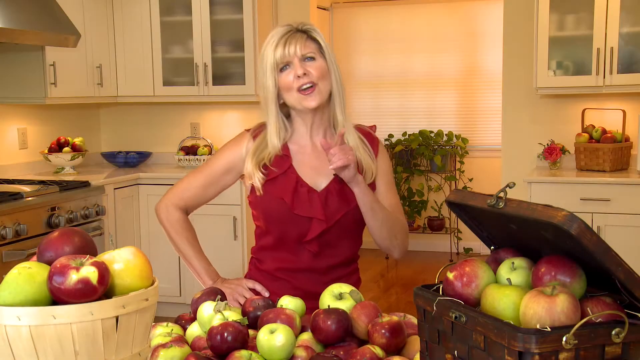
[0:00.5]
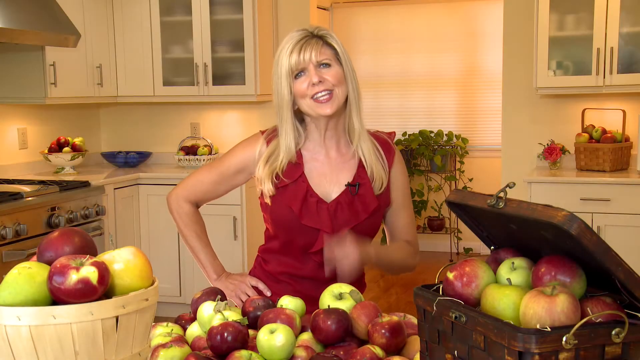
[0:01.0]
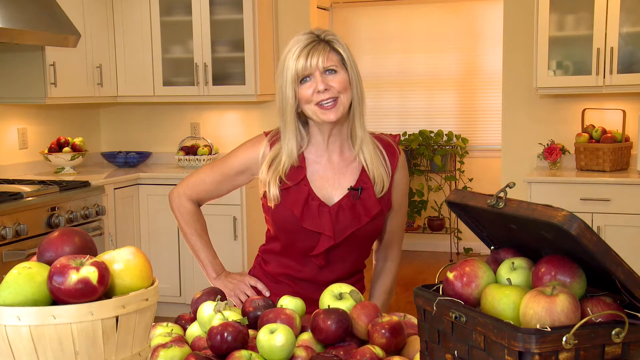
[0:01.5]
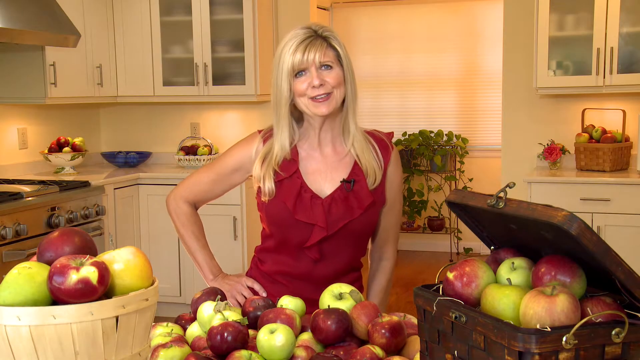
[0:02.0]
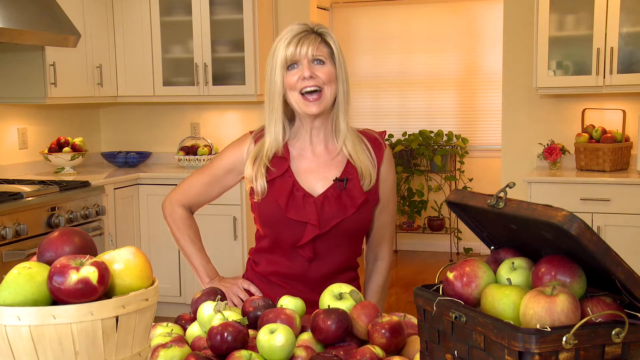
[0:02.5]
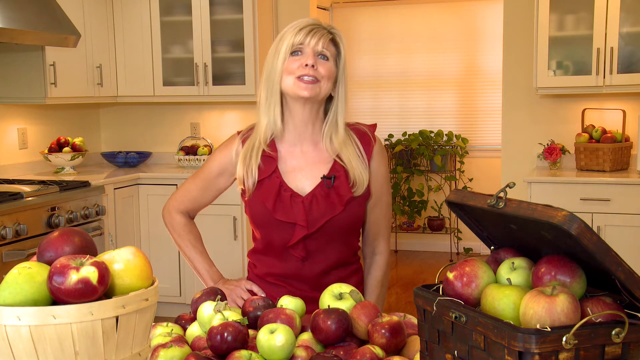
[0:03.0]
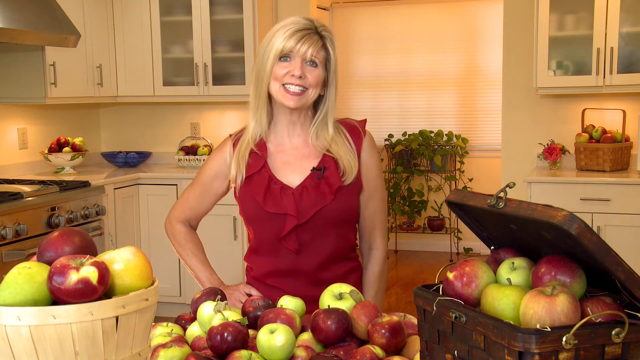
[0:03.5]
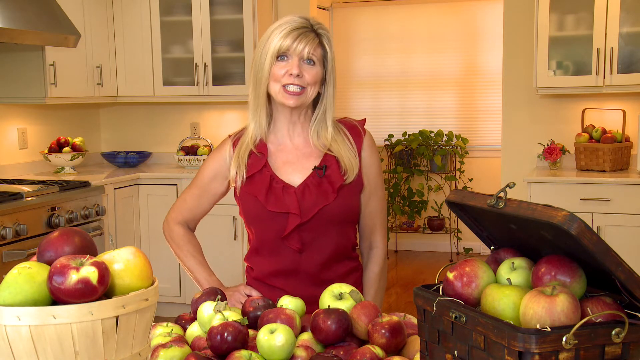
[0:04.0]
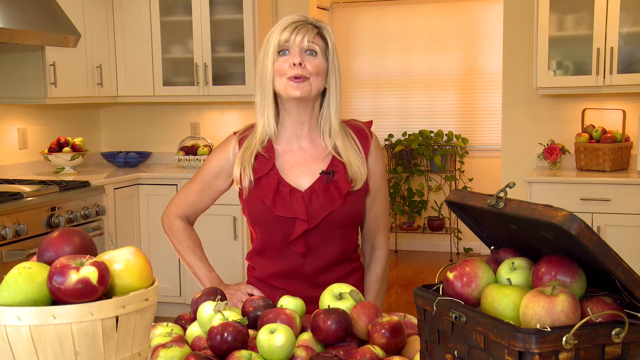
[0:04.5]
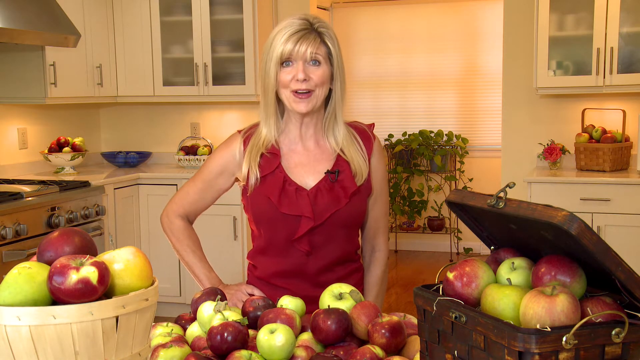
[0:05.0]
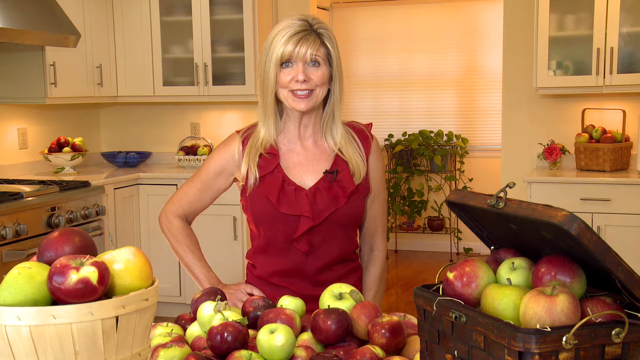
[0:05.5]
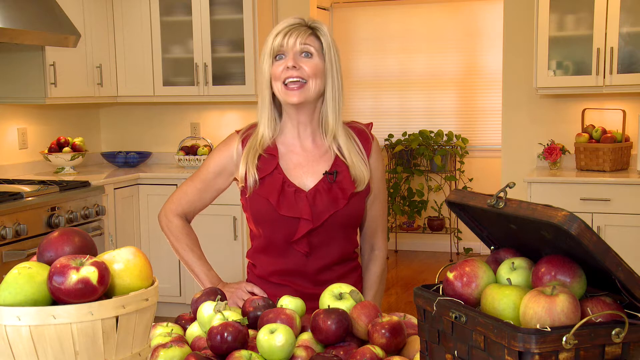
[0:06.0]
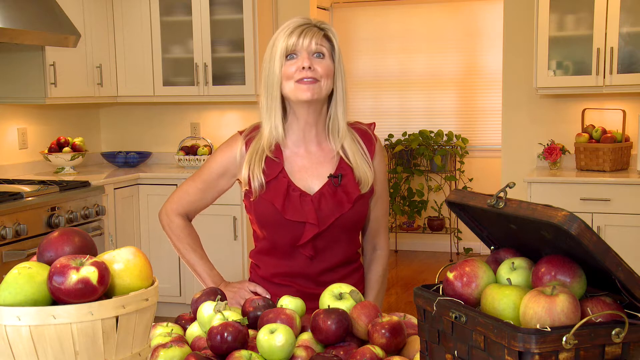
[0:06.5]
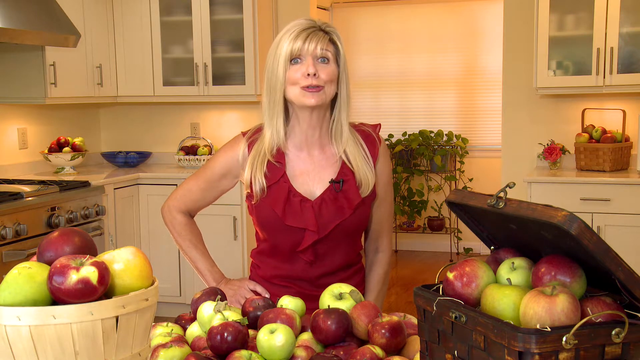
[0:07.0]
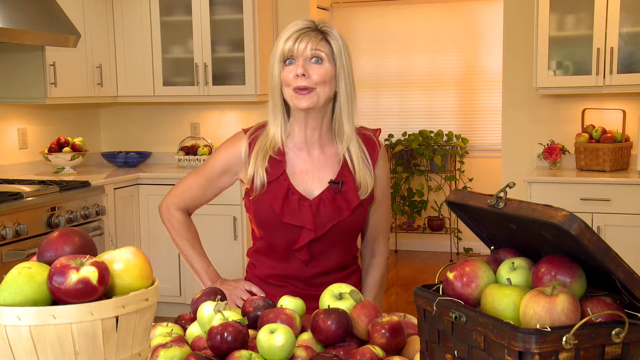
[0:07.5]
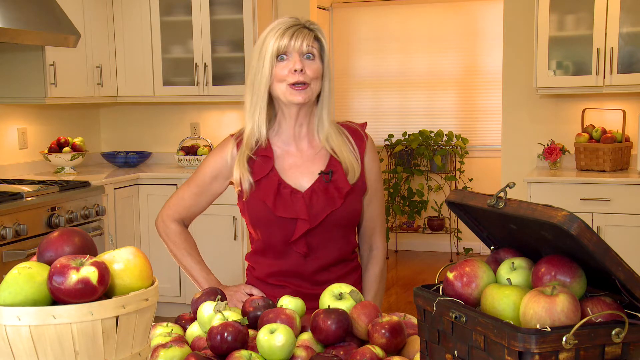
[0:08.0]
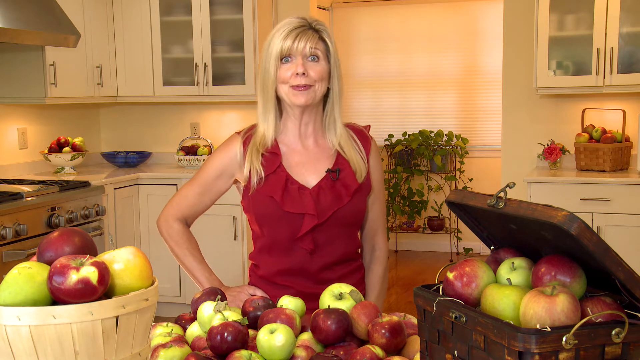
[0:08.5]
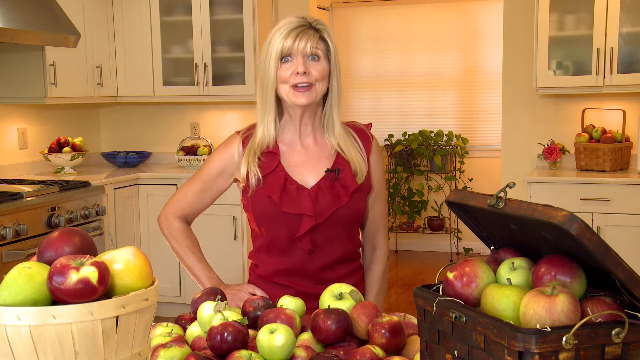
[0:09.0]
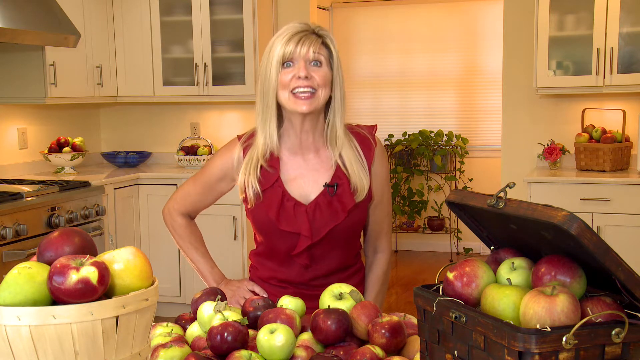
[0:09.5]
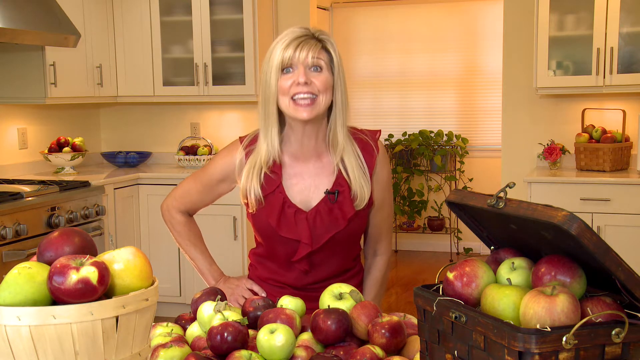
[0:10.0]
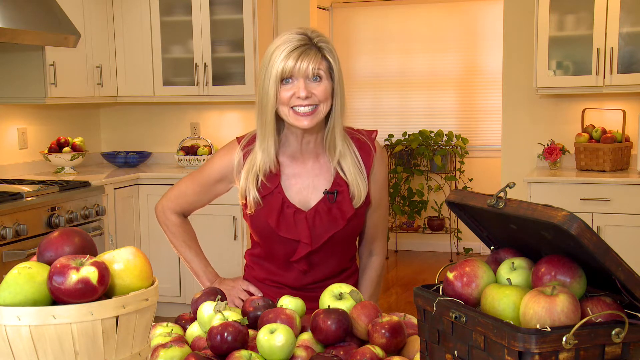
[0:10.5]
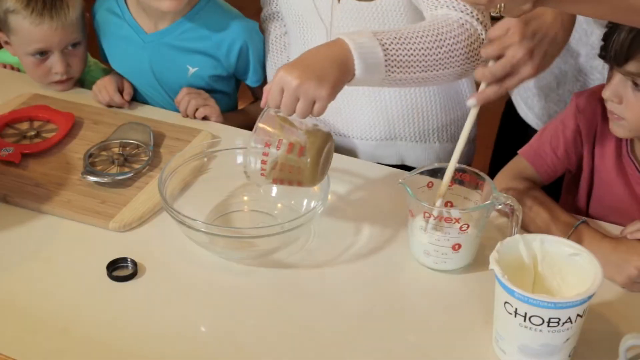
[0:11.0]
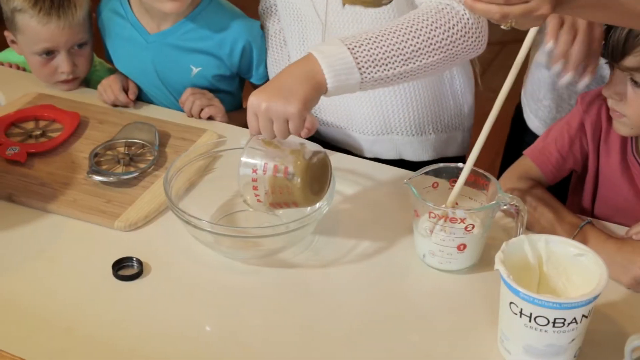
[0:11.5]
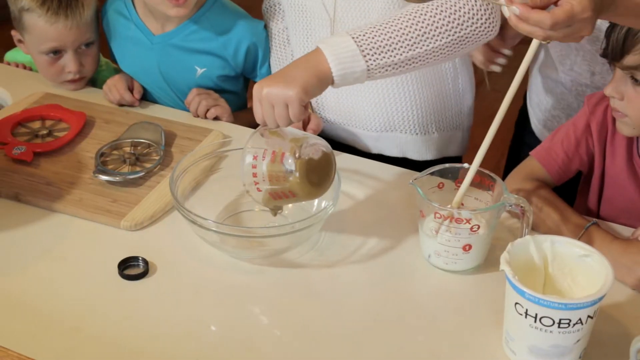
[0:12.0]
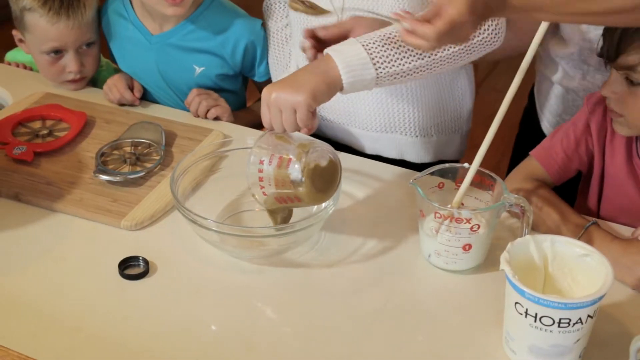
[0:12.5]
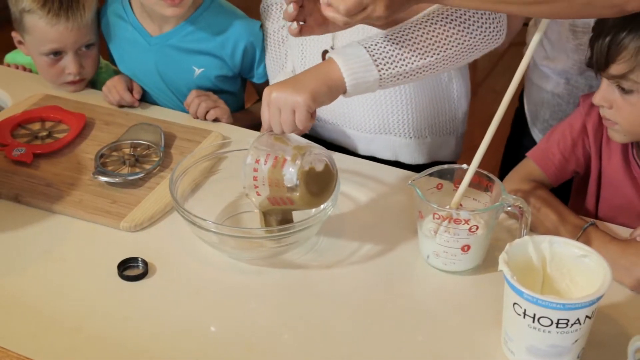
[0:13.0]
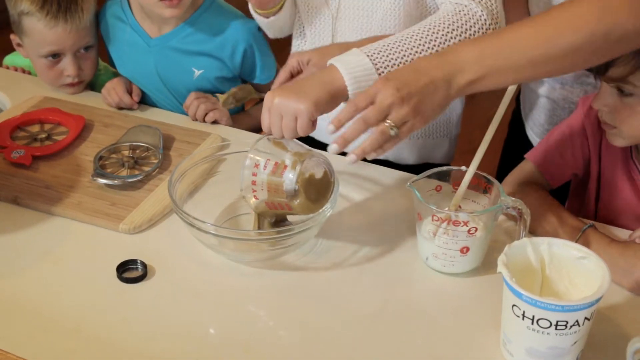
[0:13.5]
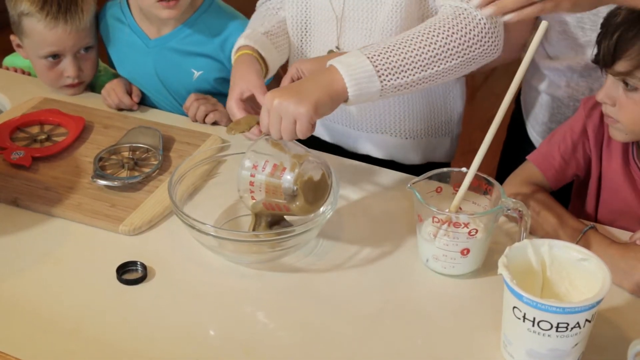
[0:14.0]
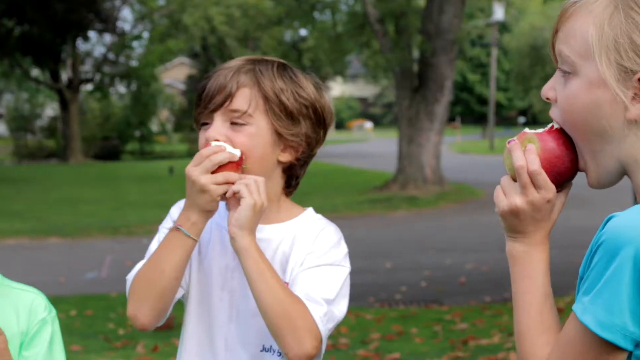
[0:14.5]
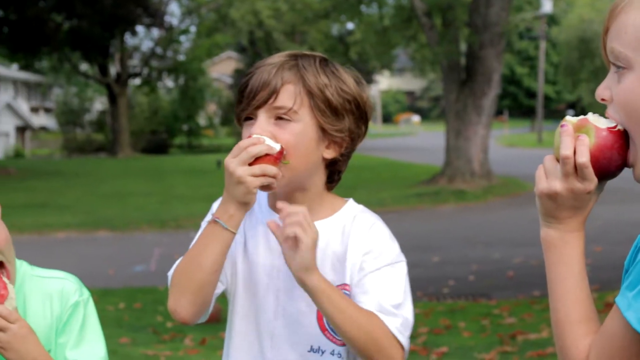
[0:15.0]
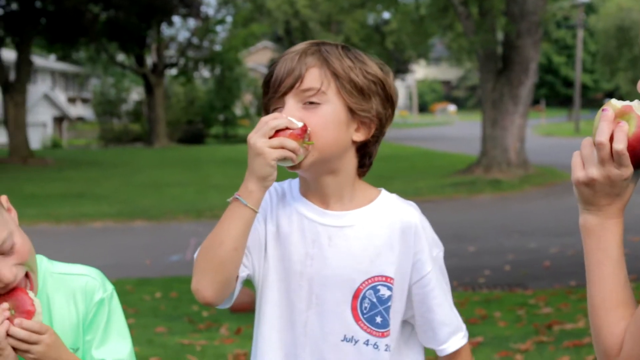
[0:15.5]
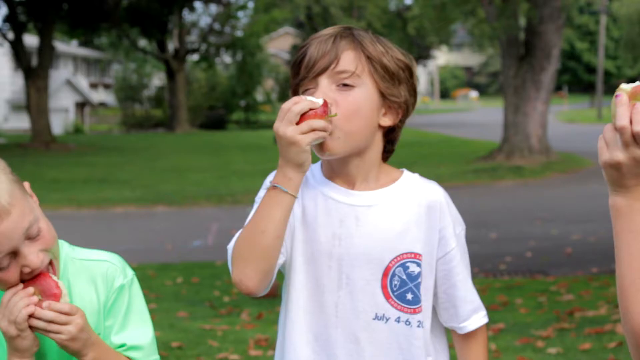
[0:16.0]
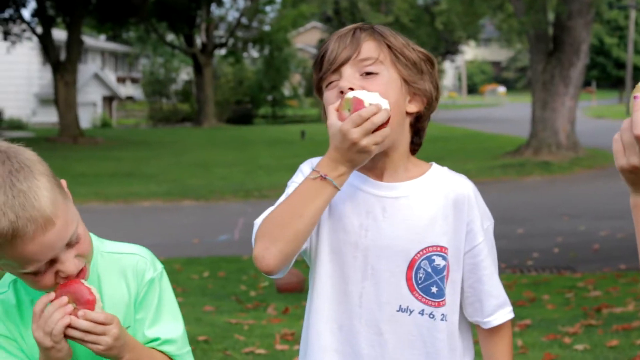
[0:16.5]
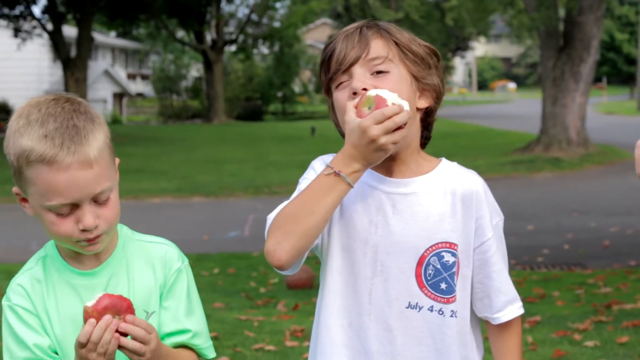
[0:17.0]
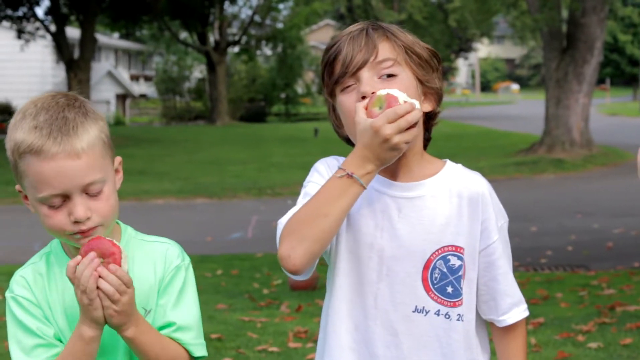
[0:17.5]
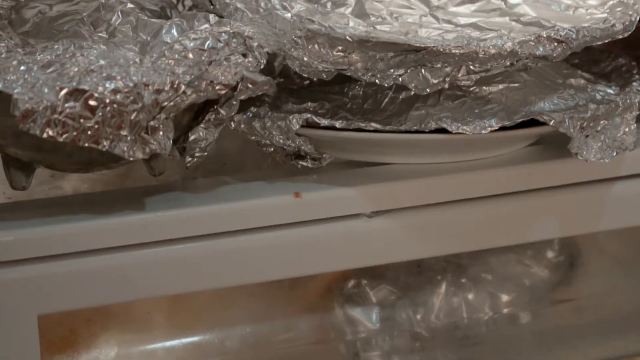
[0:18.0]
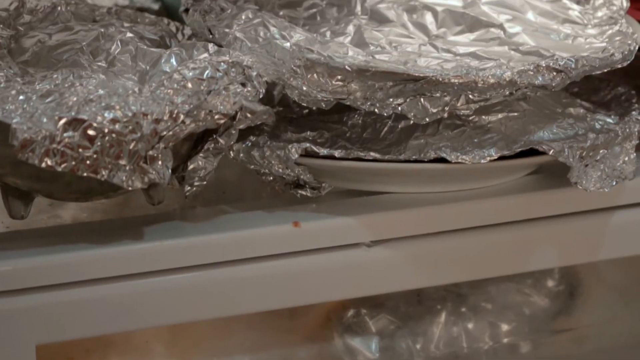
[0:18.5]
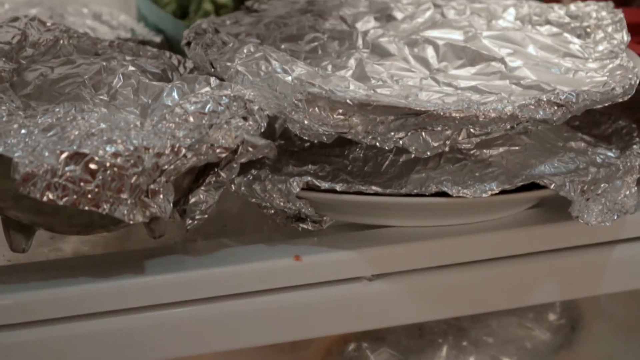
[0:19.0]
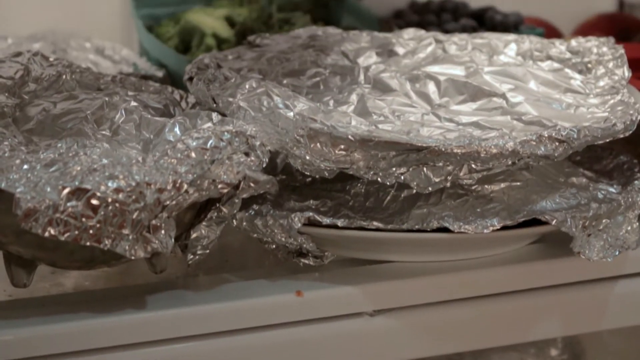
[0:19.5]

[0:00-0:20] A woman wearing a red ruffled shirt and red lipstick stands in a kitchen with white cabinets, white countertops and a stainless steel stove off to her right, her right hand on her hip. Apples of several different colors surround her and are in front of her: there is a bowl of apples, a pile of apples, and an open basket full of apples all around her. She speaks to the camera with her hand on her hip. Next, several people appear; few faces are visible, though a couple of kids' faces can be seen. It looks like quite a lot of kids, possibly with some adults behind them helping. There are measuring cups, bowls and apple cutters, and it looks like they are preparing something in the kitchen together. Something is poured into a glass bowl. Then three boys, one in a green shirt, one in a white shirt and one in a blue shirt, are enjoying apples. Next there is a bunch of foil, possibly plates covered with foil.